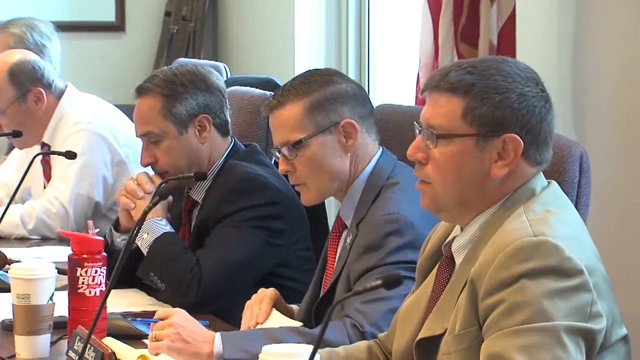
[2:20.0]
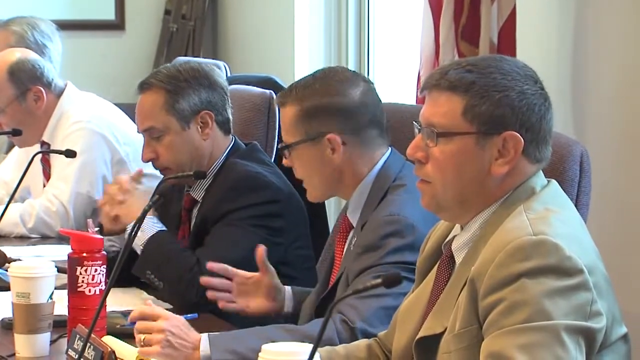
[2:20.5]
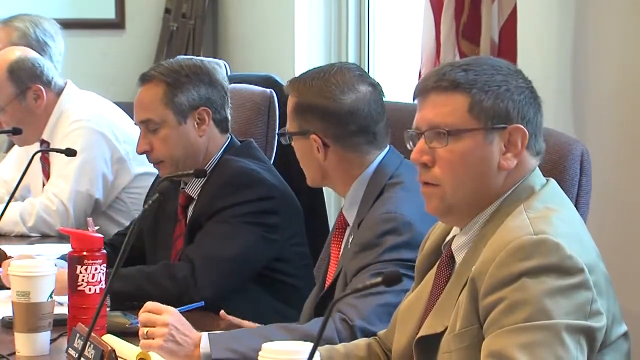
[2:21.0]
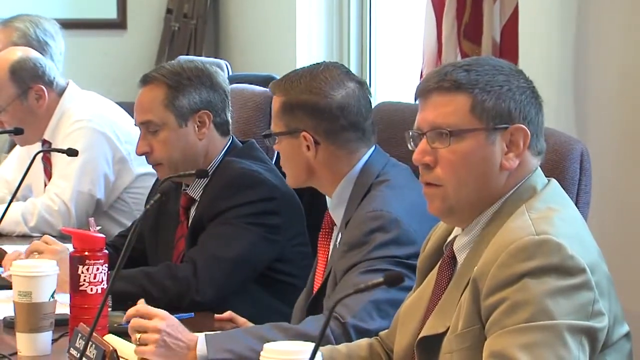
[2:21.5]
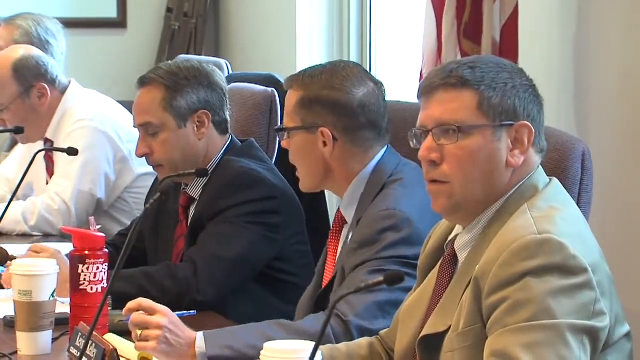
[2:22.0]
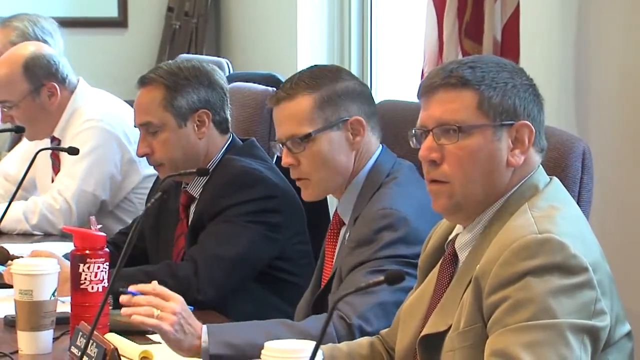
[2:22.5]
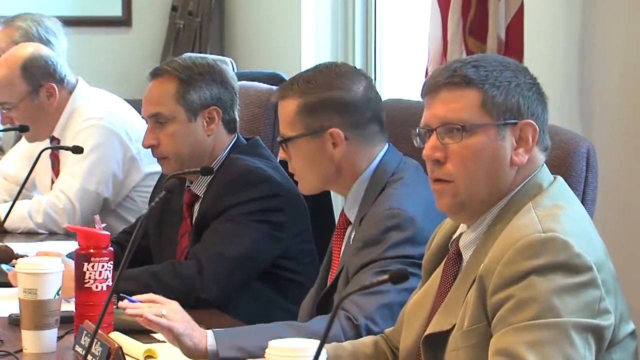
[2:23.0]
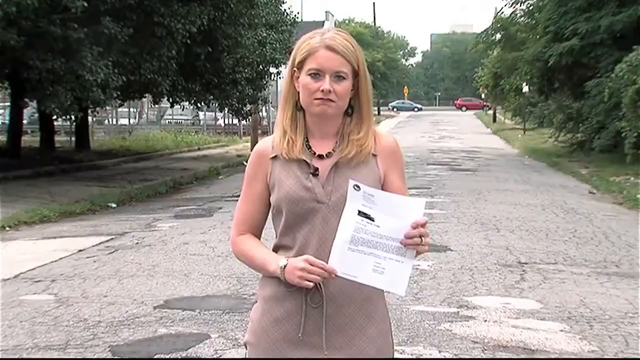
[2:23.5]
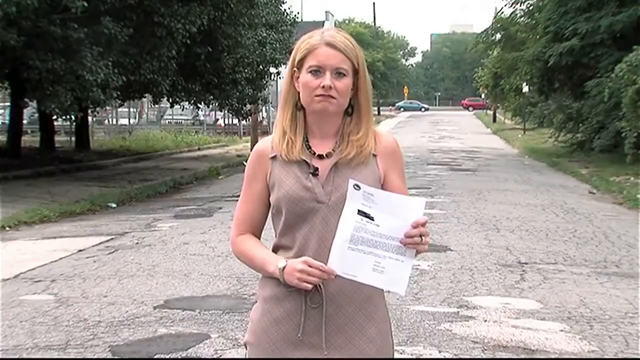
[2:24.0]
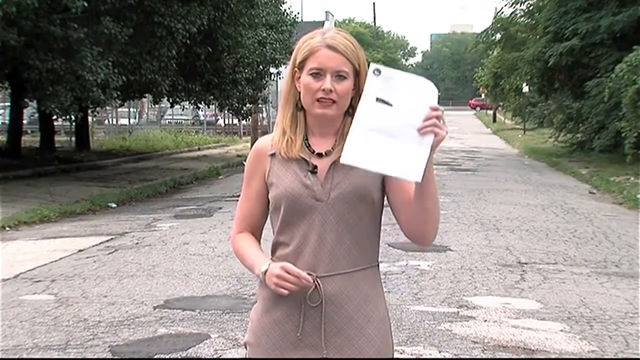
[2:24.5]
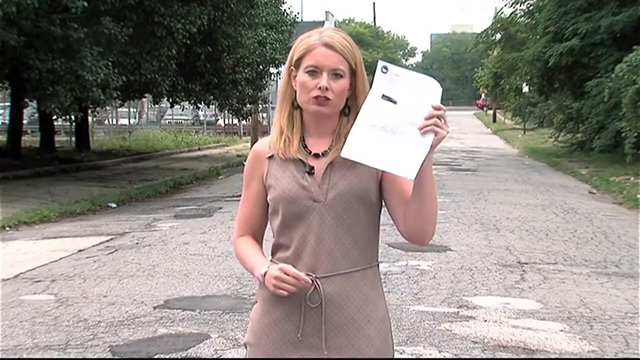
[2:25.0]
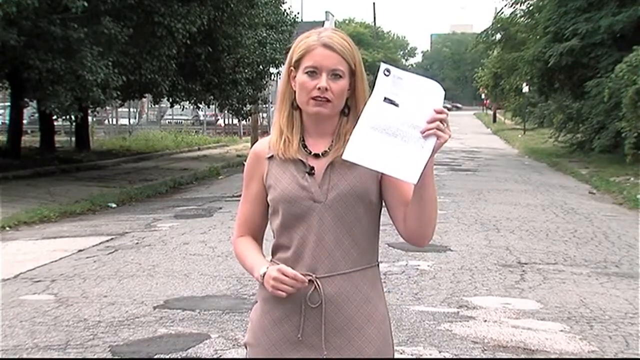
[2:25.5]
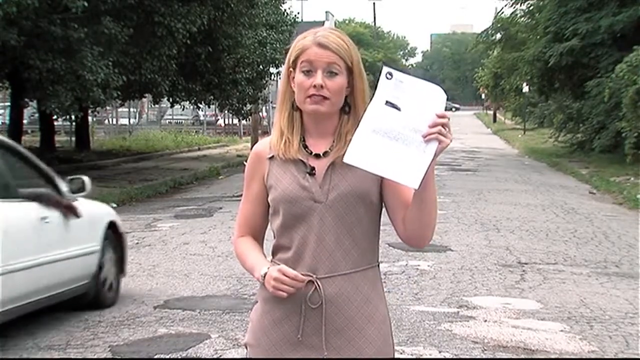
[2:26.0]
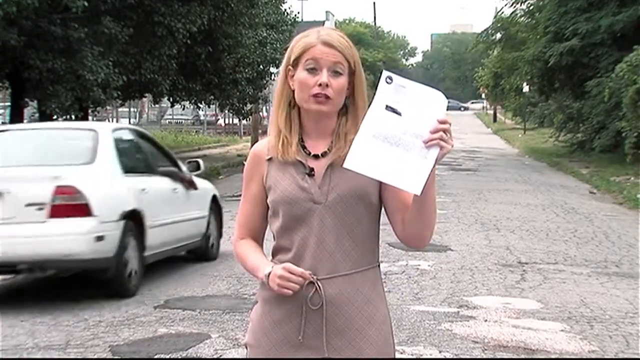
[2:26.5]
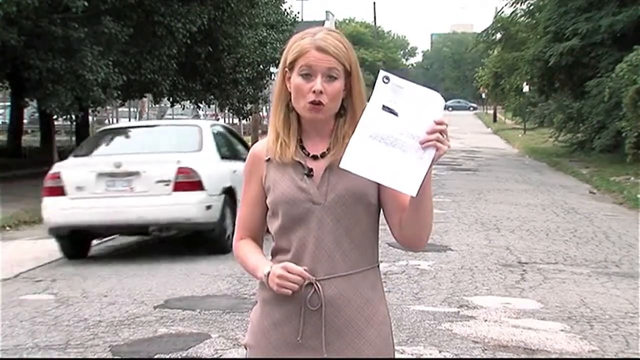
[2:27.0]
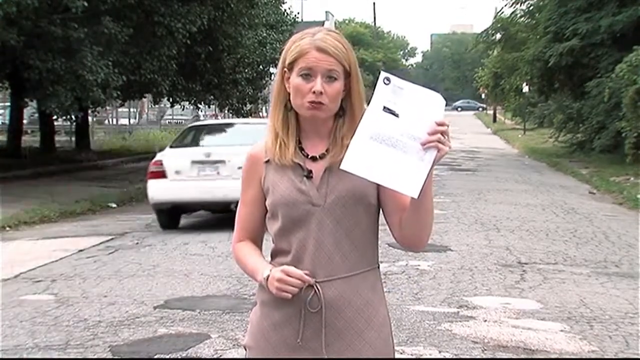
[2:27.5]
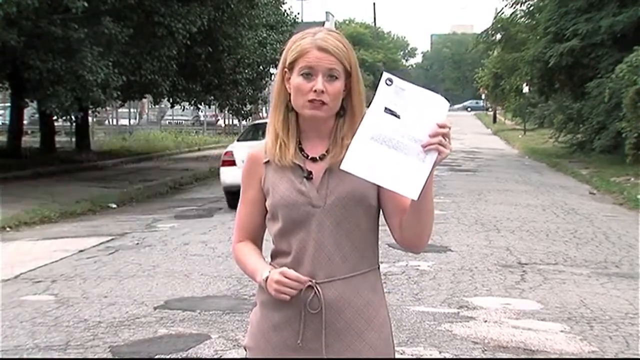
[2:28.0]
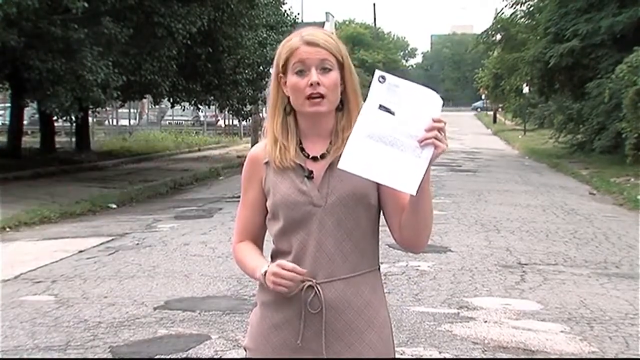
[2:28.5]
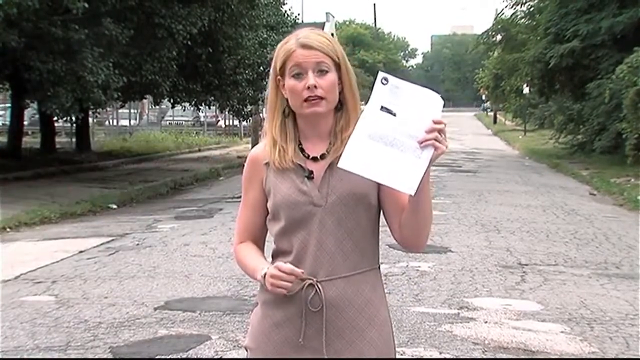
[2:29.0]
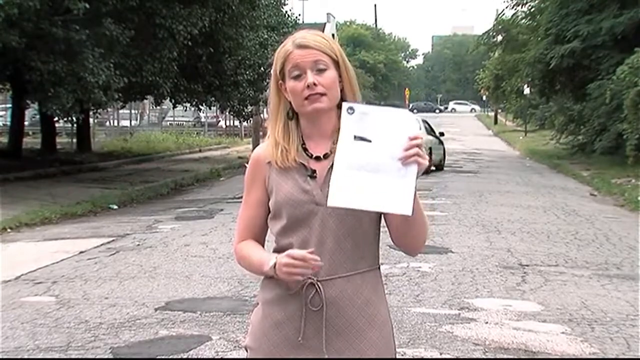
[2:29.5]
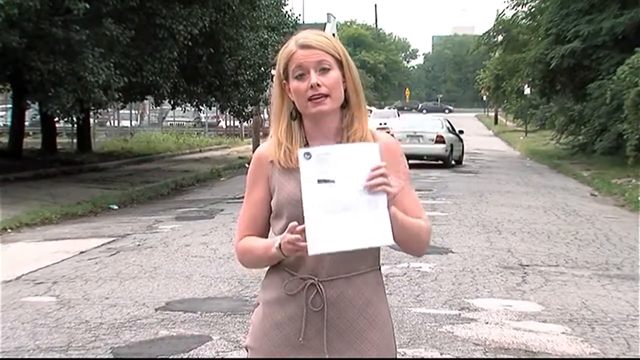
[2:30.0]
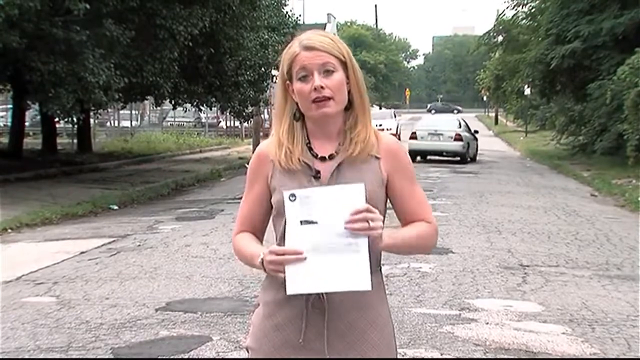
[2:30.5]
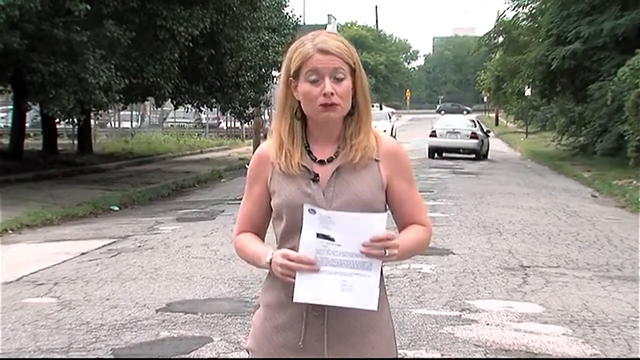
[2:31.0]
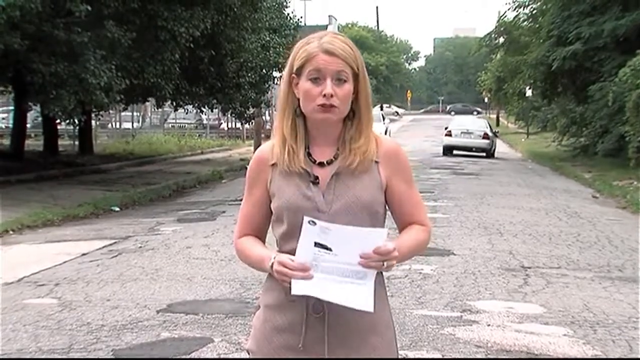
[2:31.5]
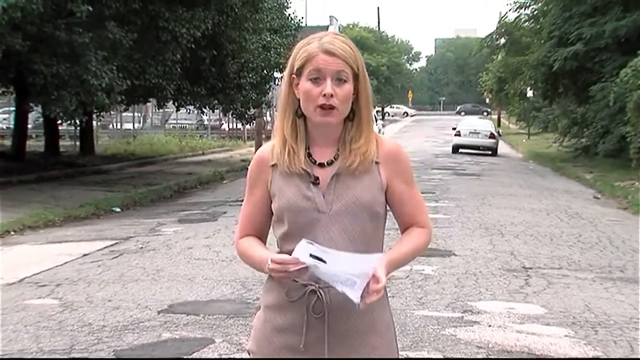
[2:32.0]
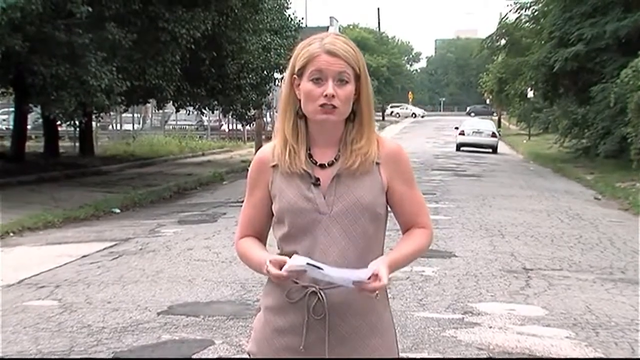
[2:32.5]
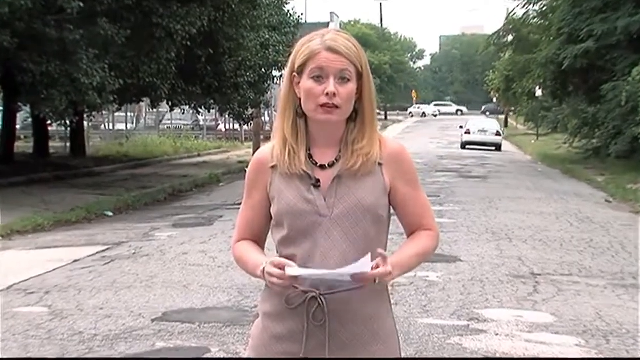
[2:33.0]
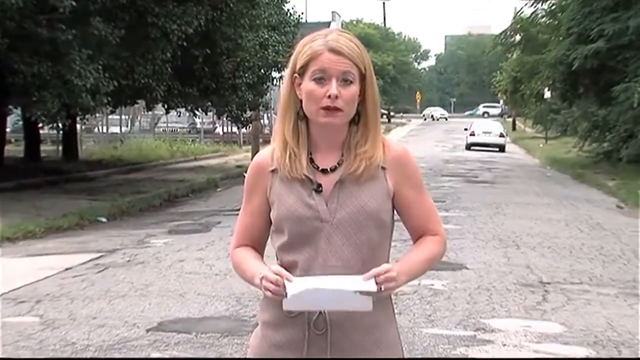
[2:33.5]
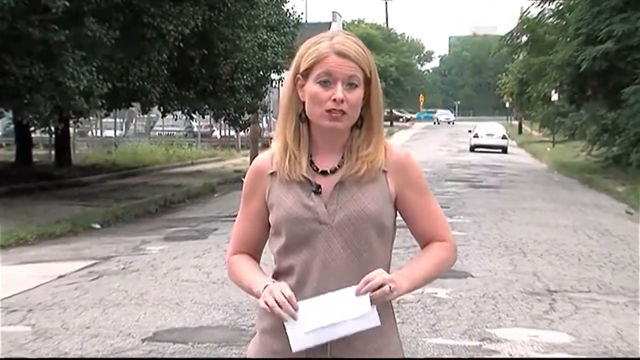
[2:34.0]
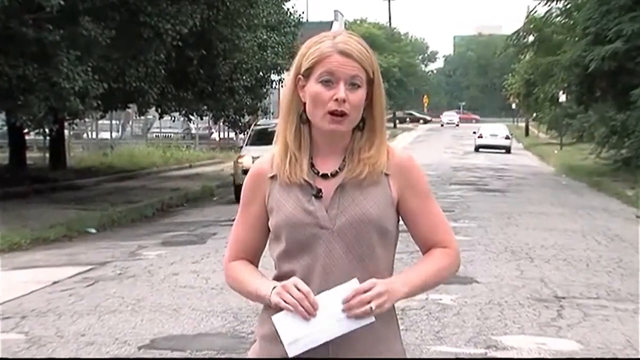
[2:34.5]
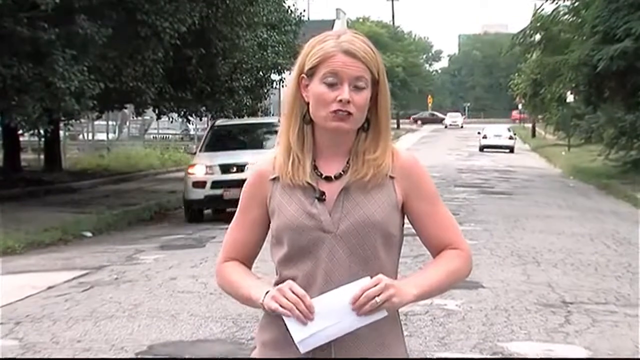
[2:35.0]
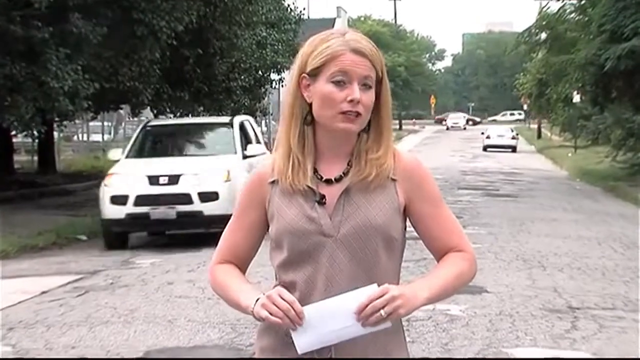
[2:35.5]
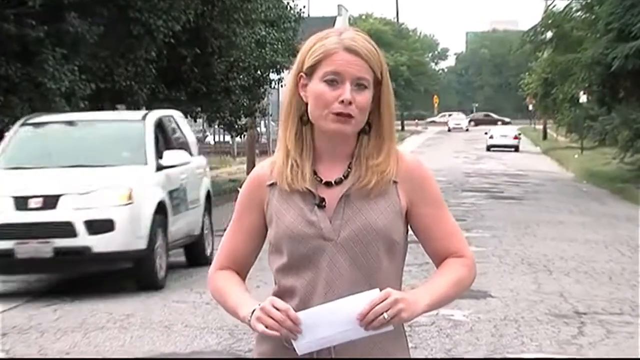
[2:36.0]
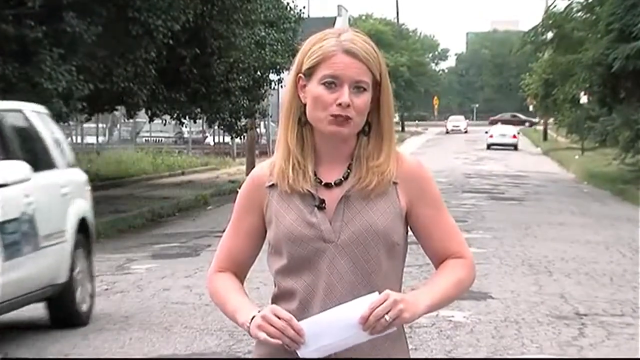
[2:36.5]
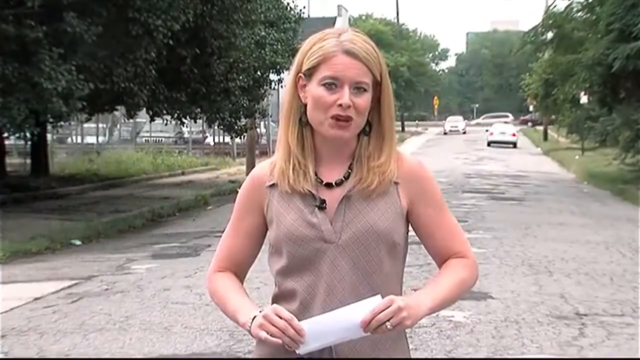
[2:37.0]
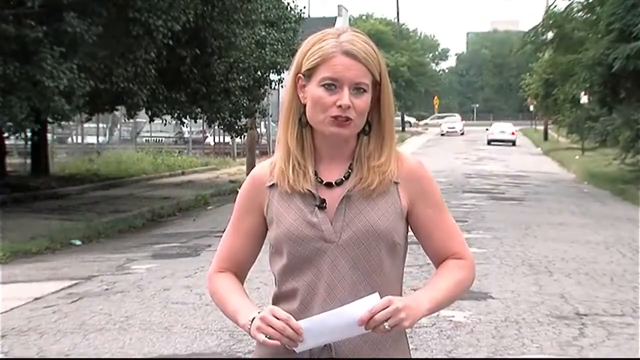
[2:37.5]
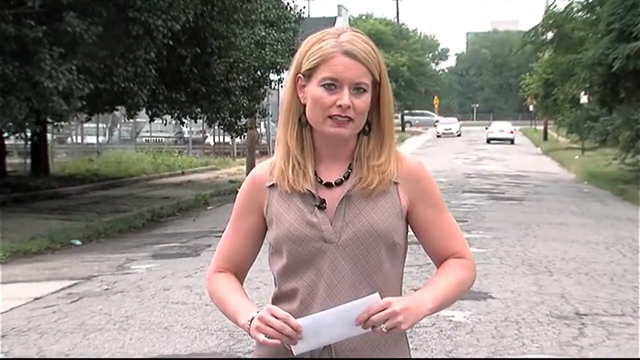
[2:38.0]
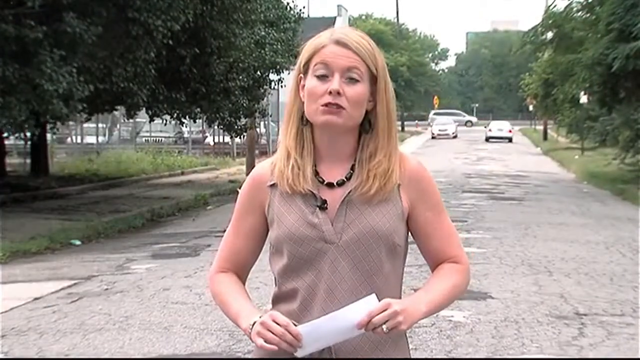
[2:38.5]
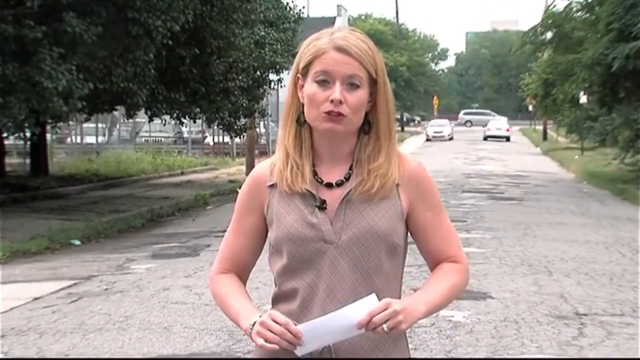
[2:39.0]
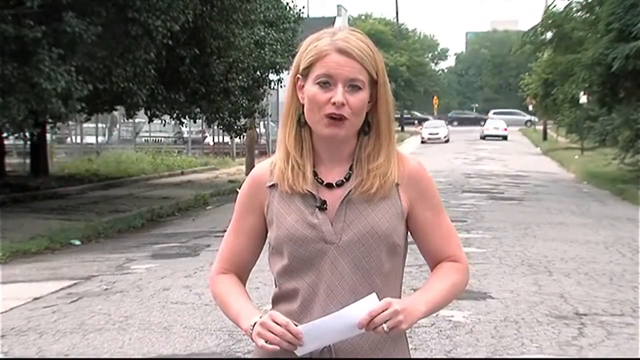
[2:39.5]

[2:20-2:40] In a boardroom or meeting room, people in suits and ties, some wearing glasses, are seated with microphones in front of them. One has a drink and another holds a coffee. A U.S. flag is visible, papers lie on the table, and the people are speaking; one of the men holds a pen in his left hand. The video shifts back to the lady reporting on the street, still holding the claim form on the poorly done road. Behind her are a grey car, a red vehicle, parked vehicles and trees. She shows the claim form held in her left hand as a white vehicle passes by. Still in the same attire and speaking to the camera, she folds the paper neatly while cars pass her, coming from both the front and the back.